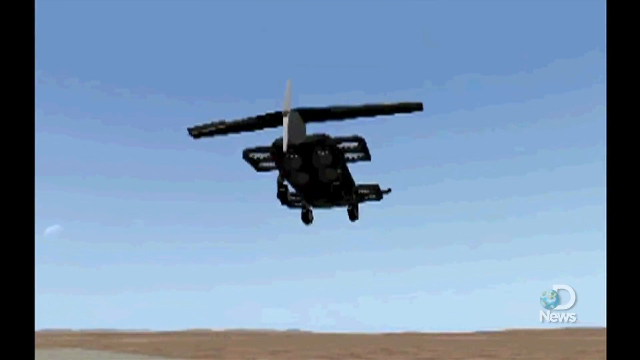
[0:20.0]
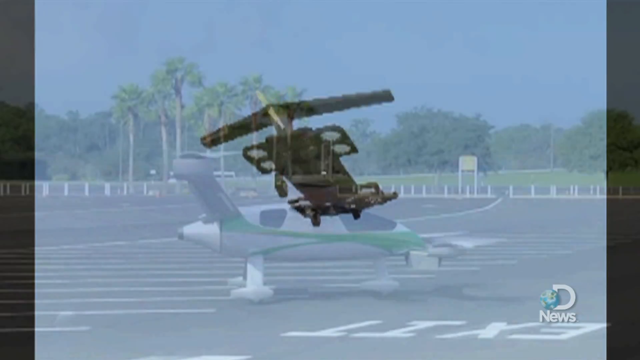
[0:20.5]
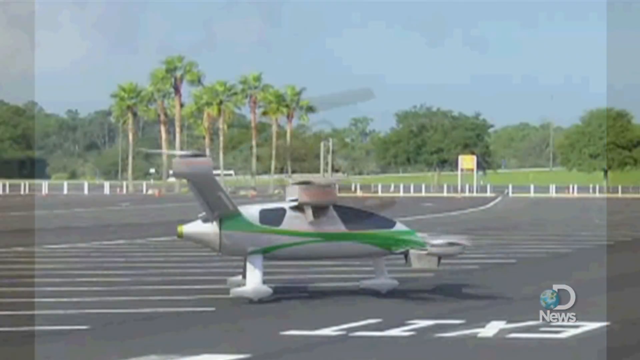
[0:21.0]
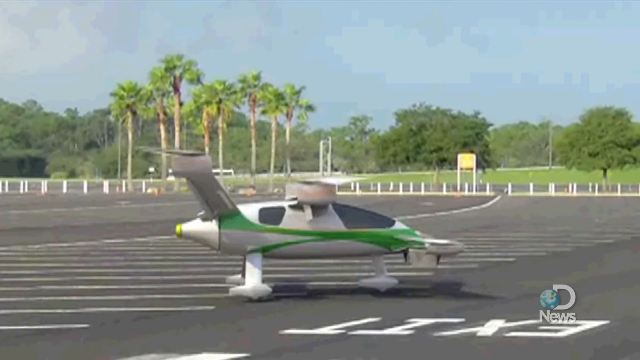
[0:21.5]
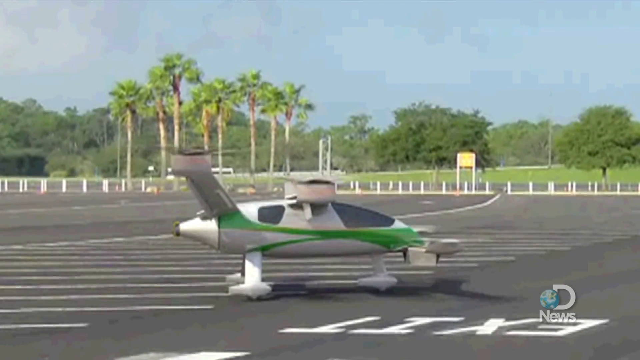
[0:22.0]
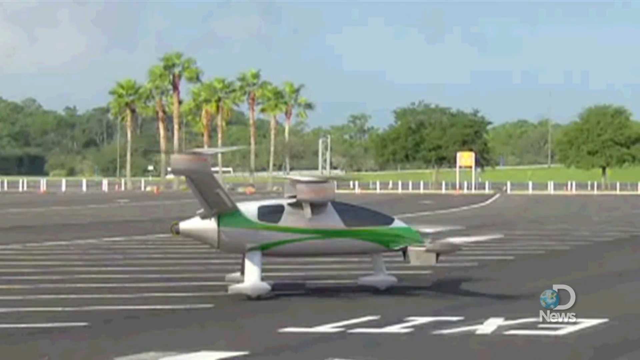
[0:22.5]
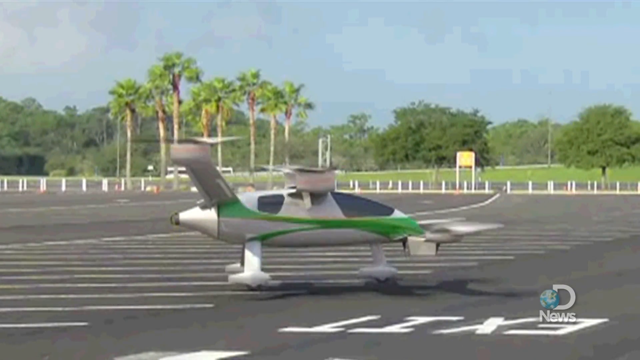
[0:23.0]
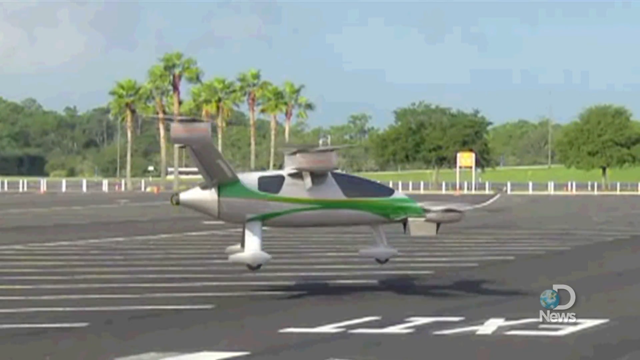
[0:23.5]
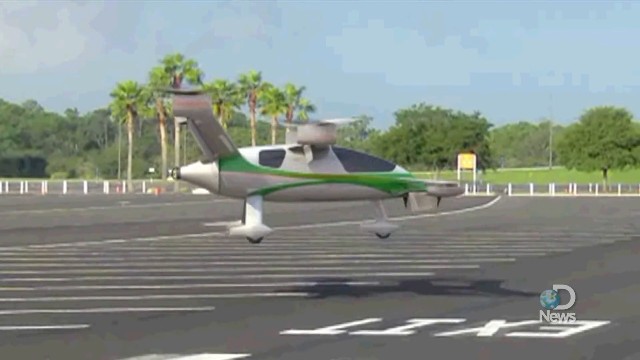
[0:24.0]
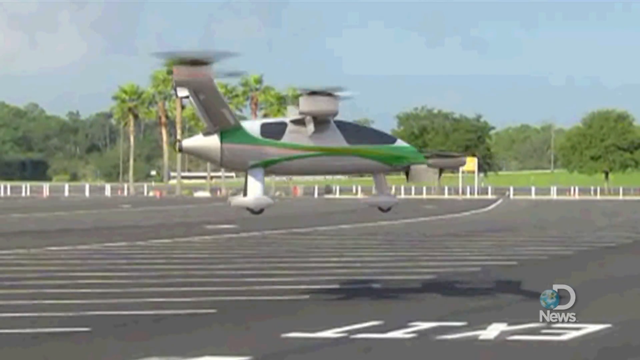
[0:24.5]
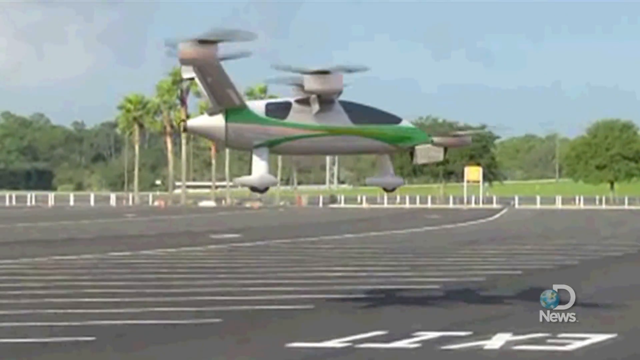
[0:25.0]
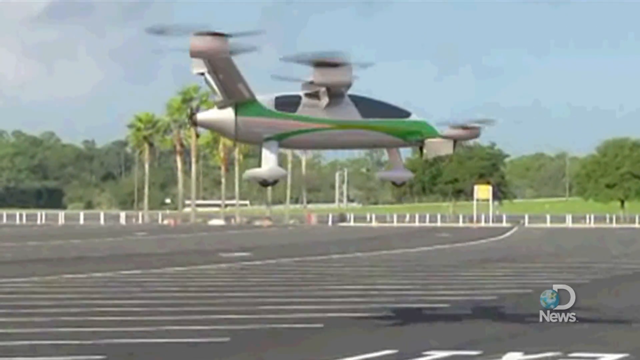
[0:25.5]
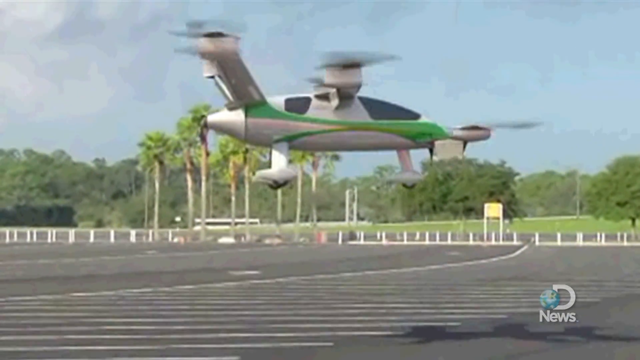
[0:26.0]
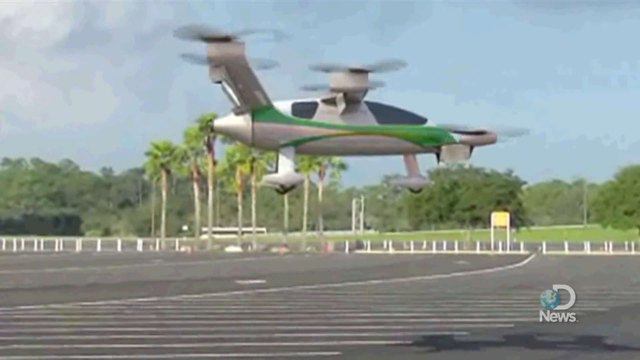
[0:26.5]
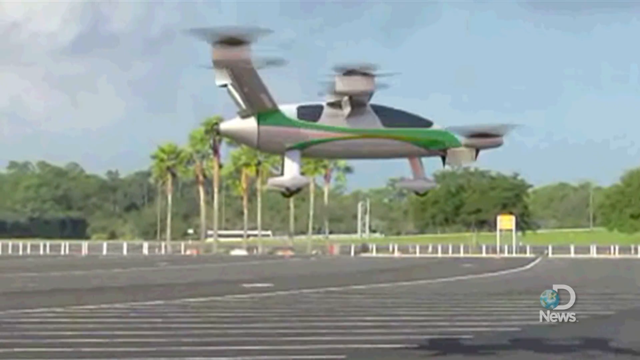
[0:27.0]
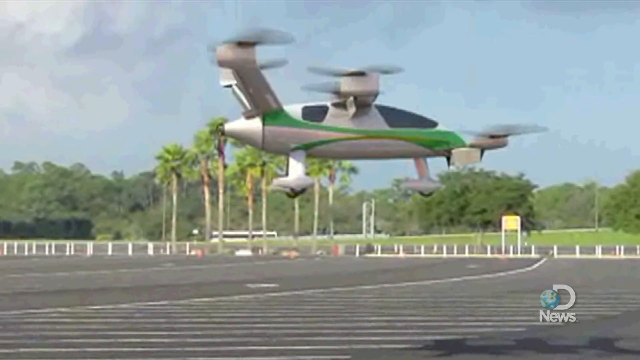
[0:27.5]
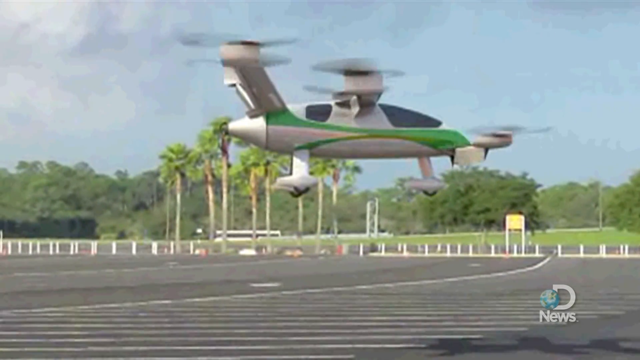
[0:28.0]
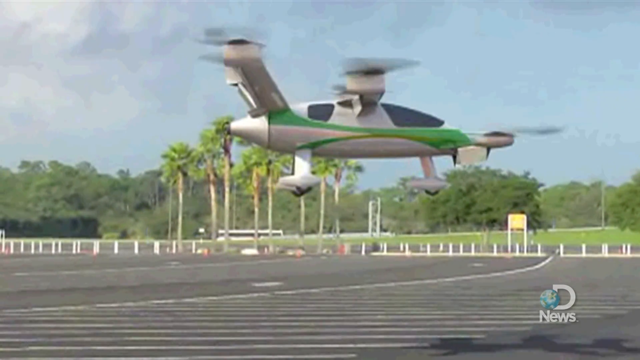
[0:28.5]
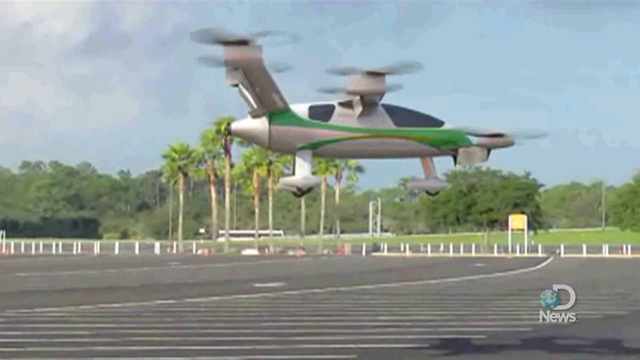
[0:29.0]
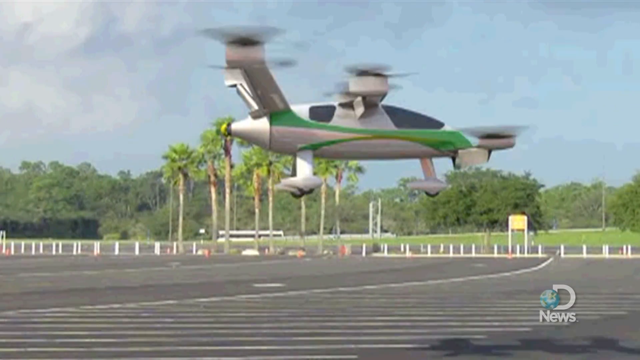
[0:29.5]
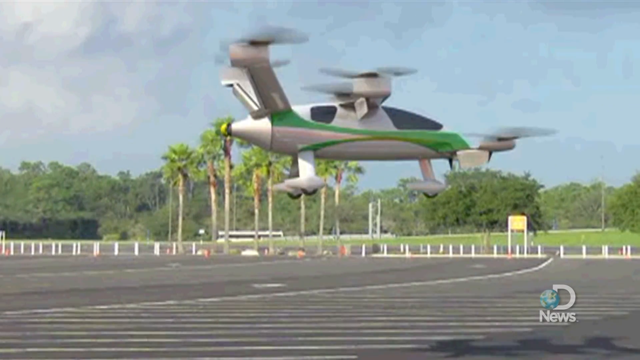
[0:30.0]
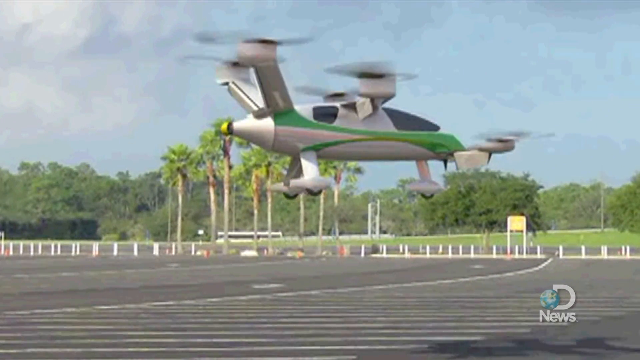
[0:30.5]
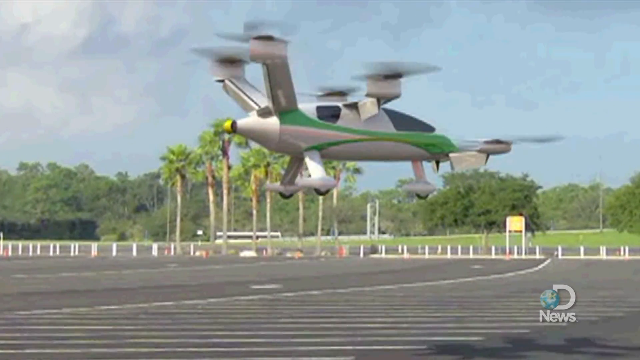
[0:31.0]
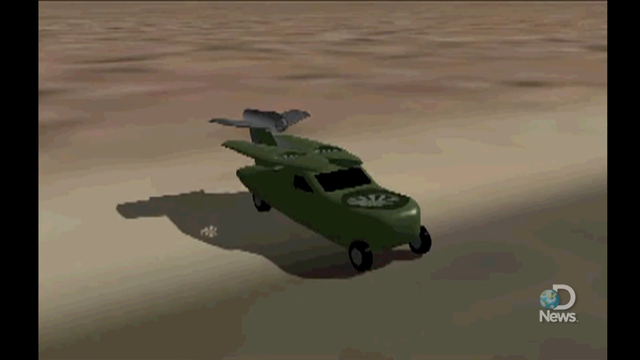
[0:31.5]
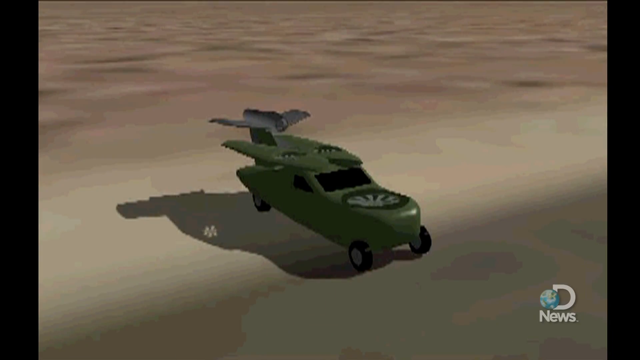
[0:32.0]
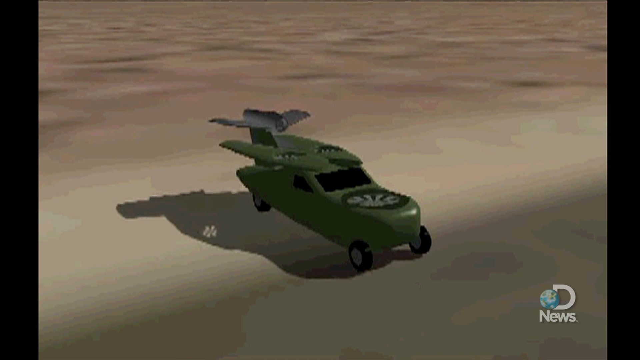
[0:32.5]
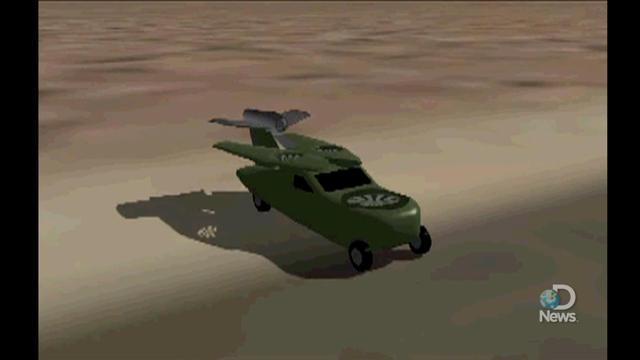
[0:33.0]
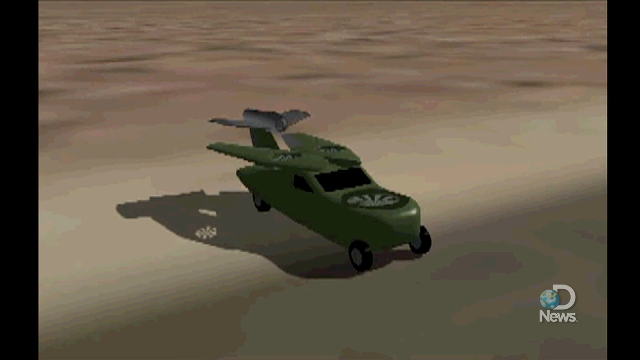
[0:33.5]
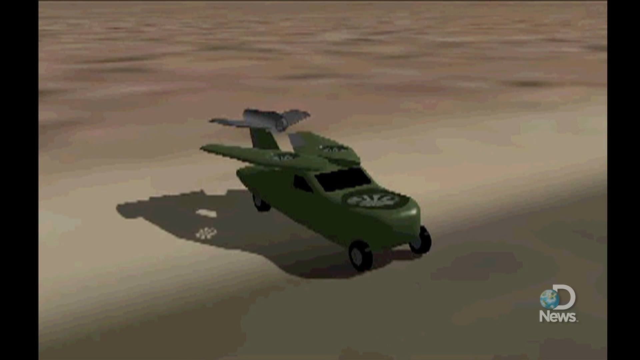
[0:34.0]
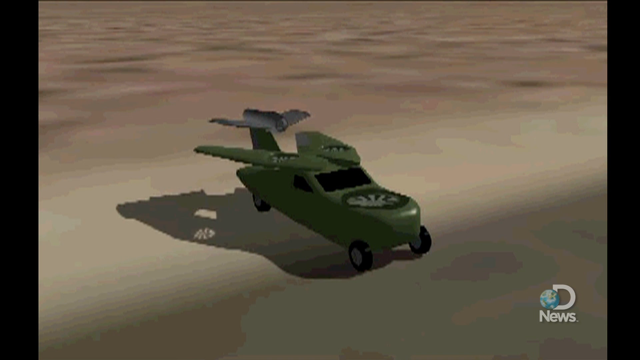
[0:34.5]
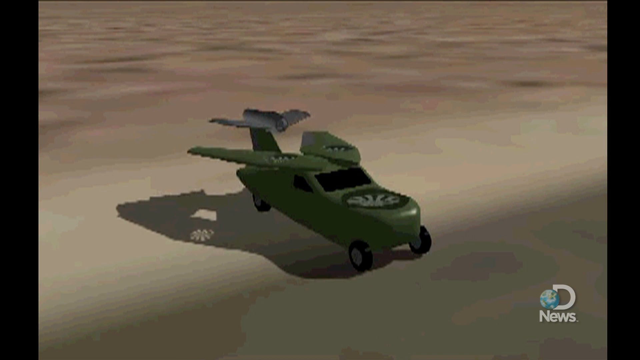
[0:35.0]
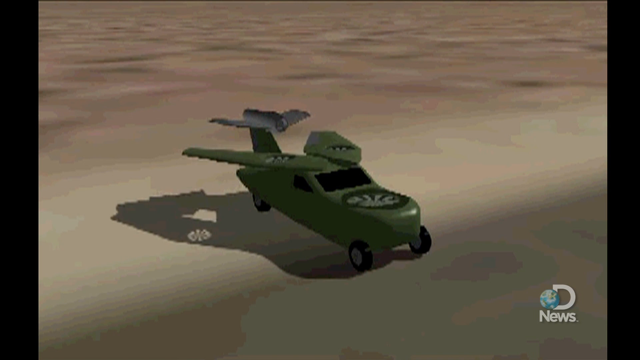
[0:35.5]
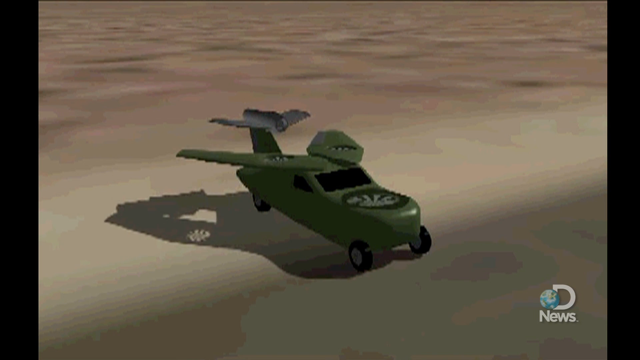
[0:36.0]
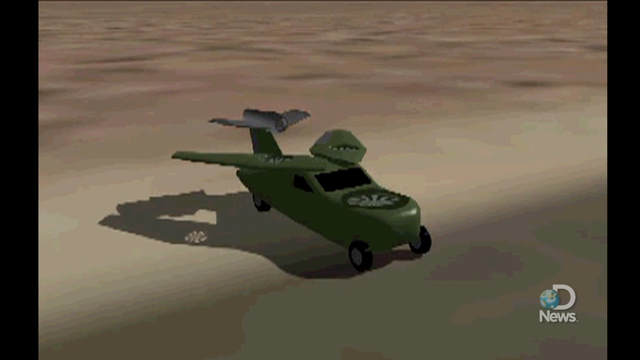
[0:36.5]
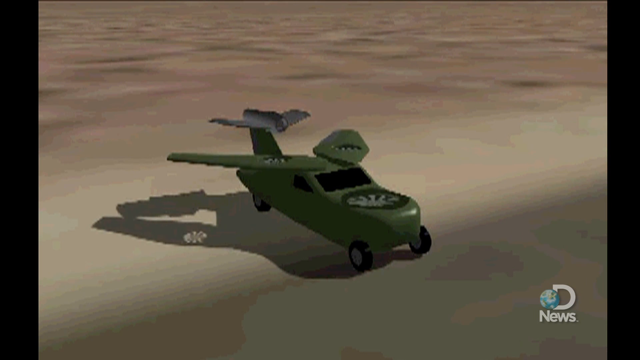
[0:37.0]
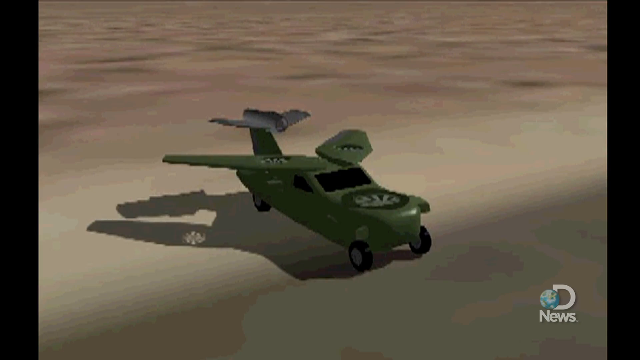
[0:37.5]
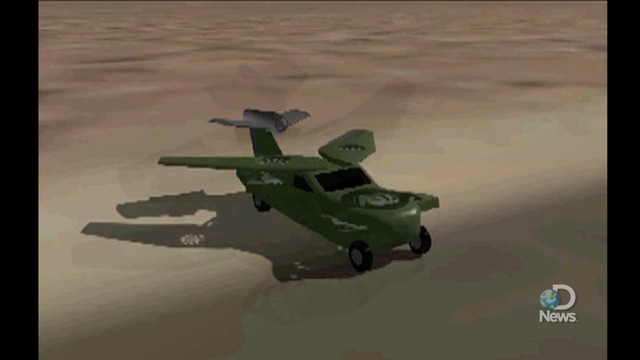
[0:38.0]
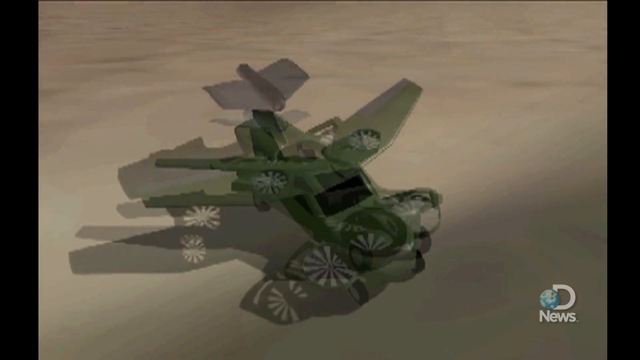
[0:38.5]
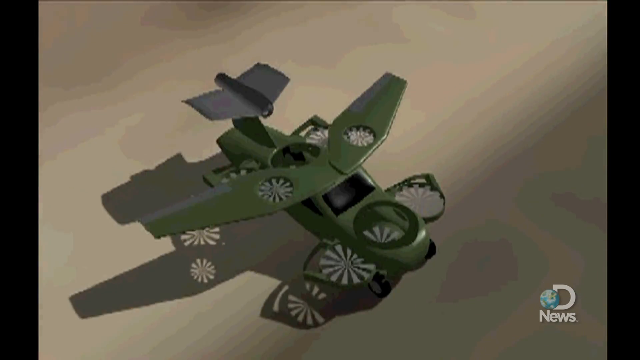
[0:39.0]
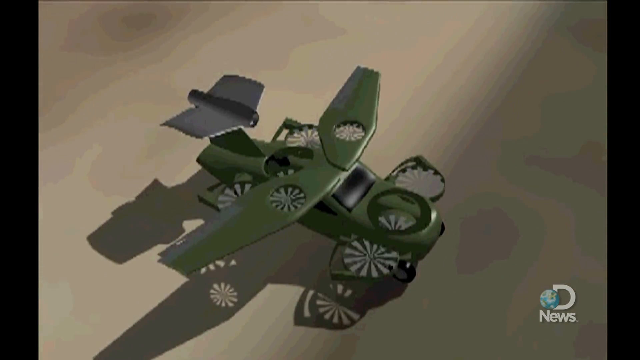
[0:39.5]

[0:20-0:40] An animation shows what looks like an airplane with a large, wide tail fin and eight drone-like rotors at the front left, front right, back right and back left. It takes off vertically, seen from its underside. The scene transitions to another animation with what look like palm trees and grass in the background, with around 10 palm trees on the left. A futuristic-looking airplane, white with green stripes and apparently oval in shape, faces right on three wheels, two at the back and one at the front. It has a number of propellers pointing upward like a drone: two in the middle, two in the front and one in the back. It takes off vertically, still facing right, rising straight up, then stays stationary in the air and begins turning counterclockwise. Next, a scene shows a green car that looks very weird, with a propeller where the hood is. It faces toward the bottom right and slightly toward the viewer, appears to have a tail behind it, and has two propellers on its roof. Wings start spreading; it looks like the wing was folded behind the car to make up the roof, and now it spreads out to the sides. The propellers start spinning. Then four propellers seem to suddenly pop out from the front left and right of the hood and the back left and right sides of the car, so it now appears to have six or seven propellers. The car is viewed from the top down. It is a very crude 3D animation.